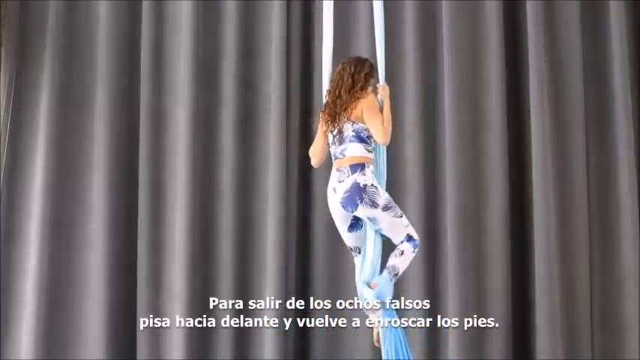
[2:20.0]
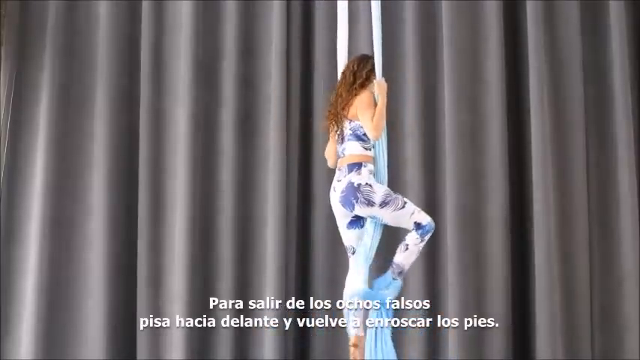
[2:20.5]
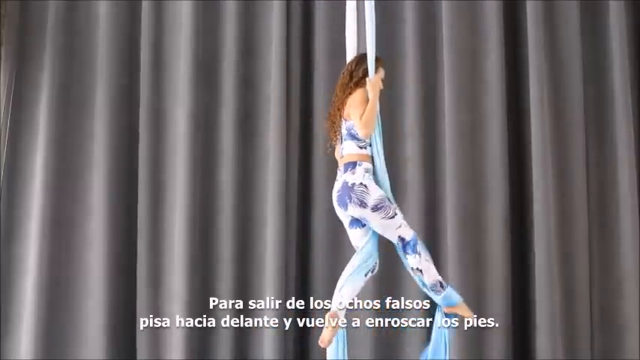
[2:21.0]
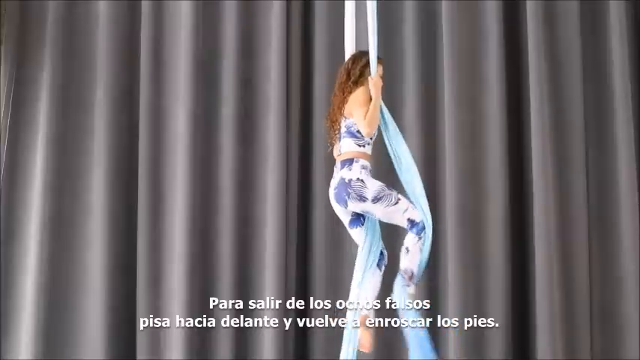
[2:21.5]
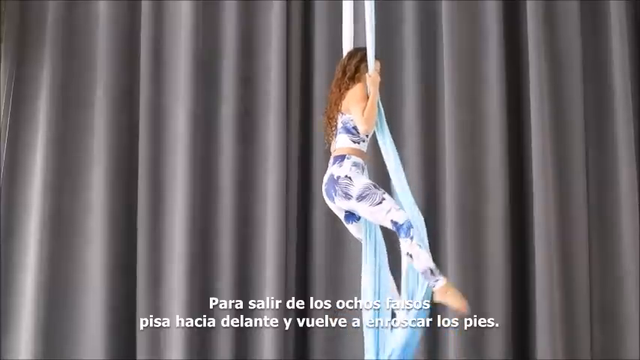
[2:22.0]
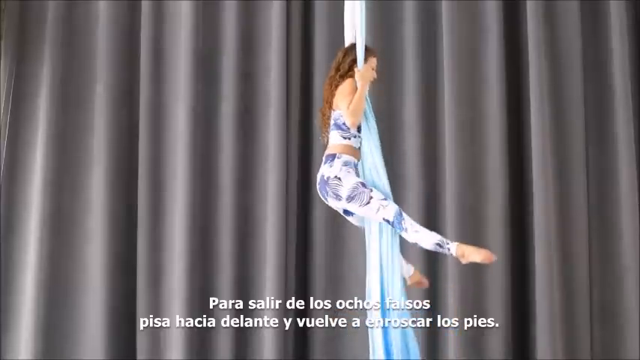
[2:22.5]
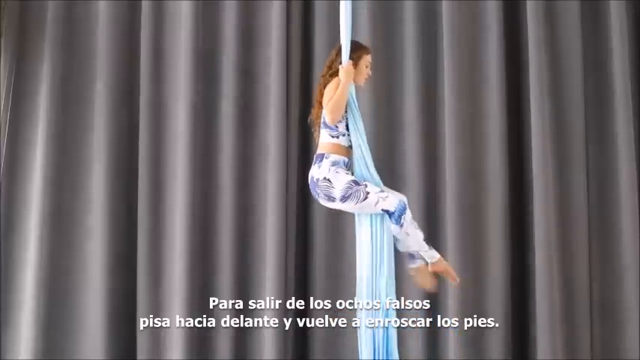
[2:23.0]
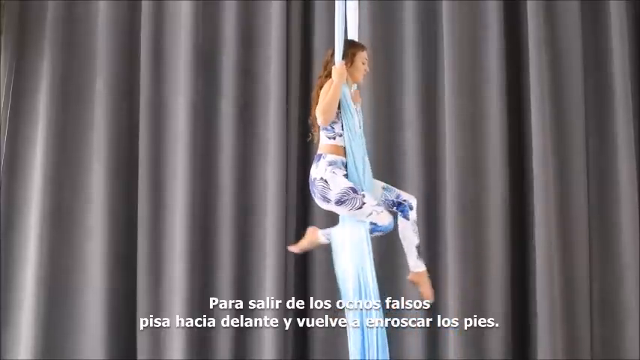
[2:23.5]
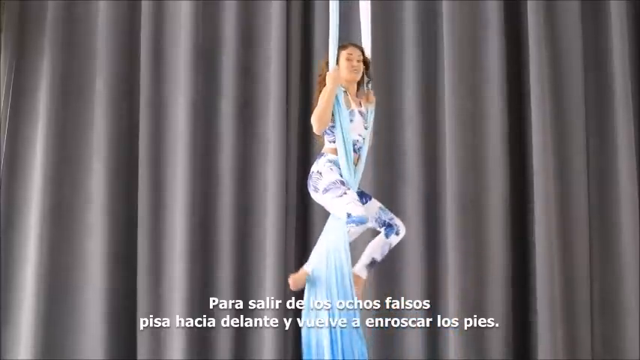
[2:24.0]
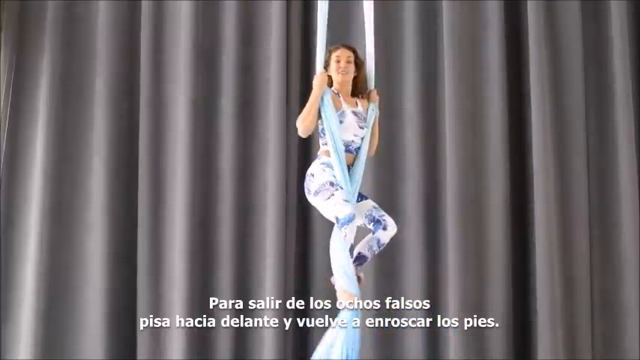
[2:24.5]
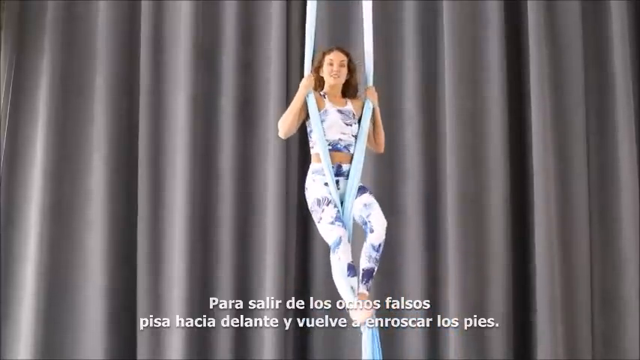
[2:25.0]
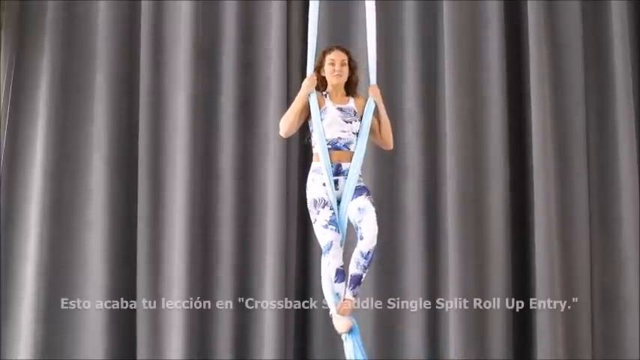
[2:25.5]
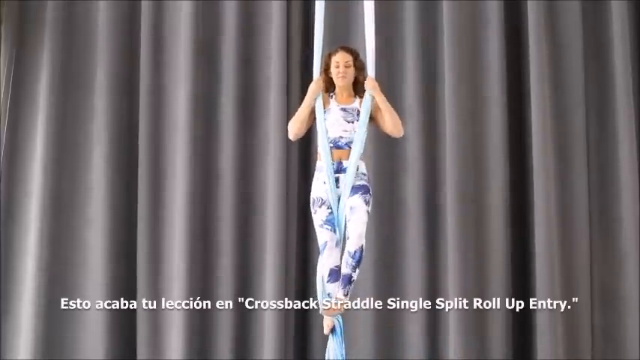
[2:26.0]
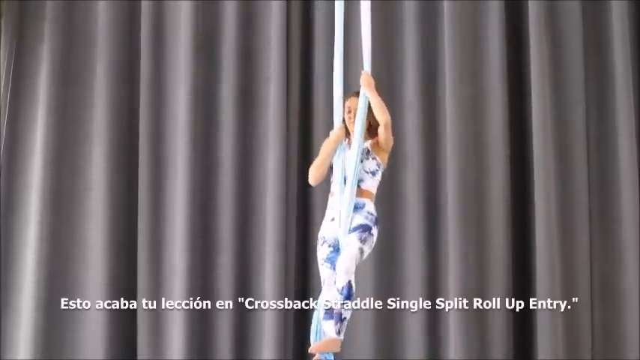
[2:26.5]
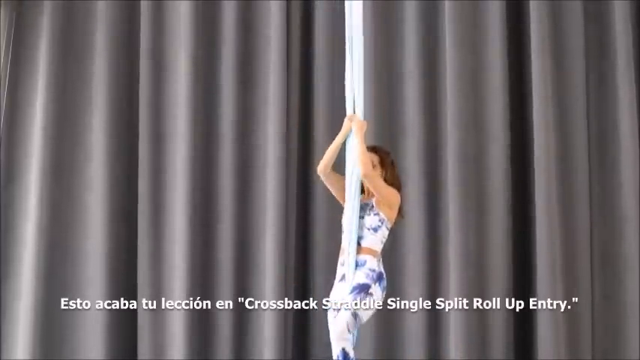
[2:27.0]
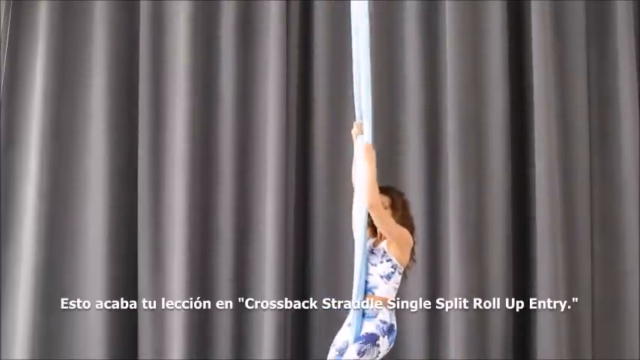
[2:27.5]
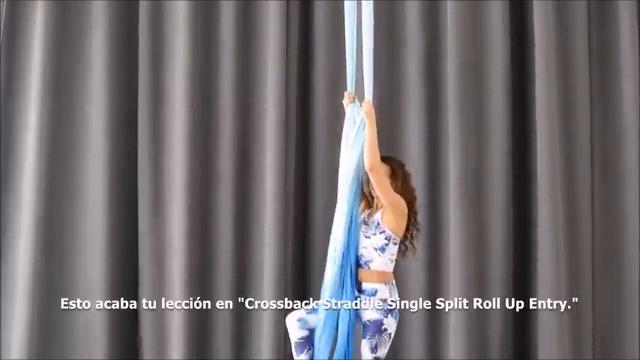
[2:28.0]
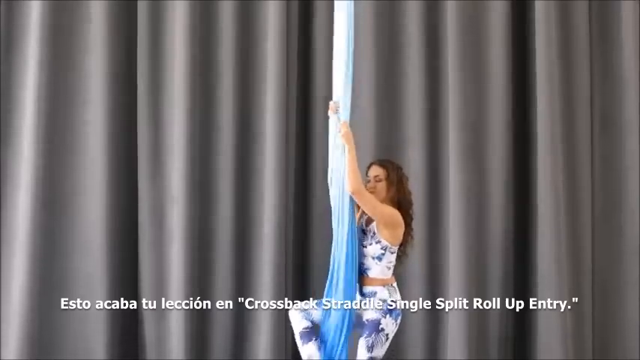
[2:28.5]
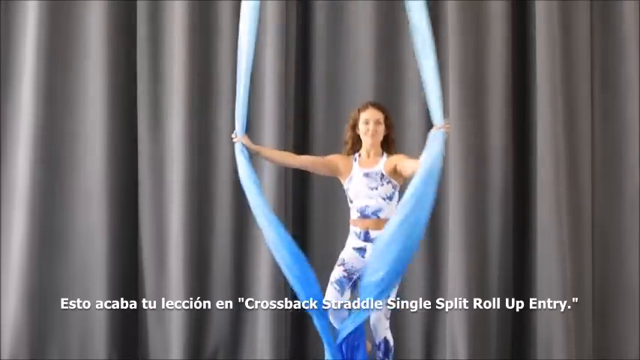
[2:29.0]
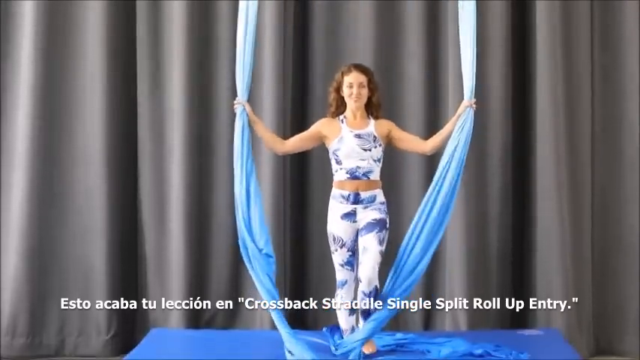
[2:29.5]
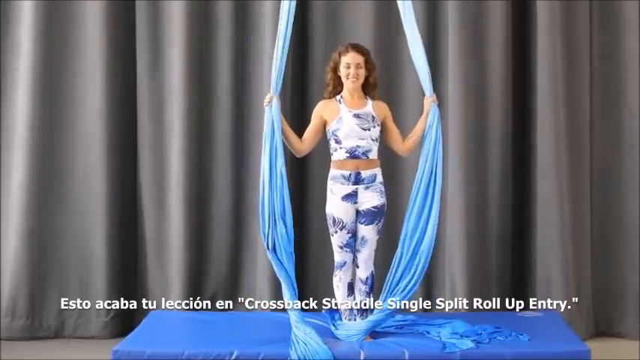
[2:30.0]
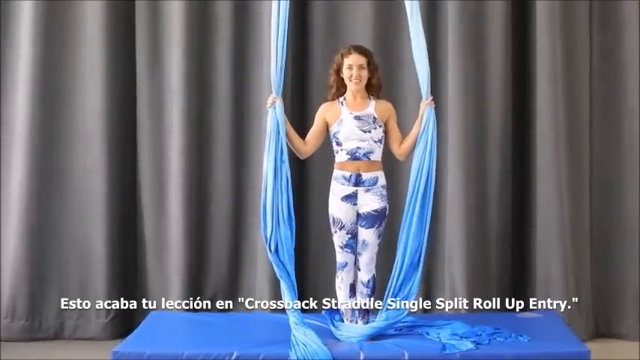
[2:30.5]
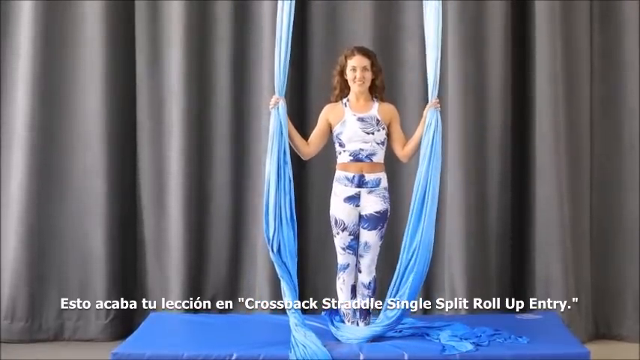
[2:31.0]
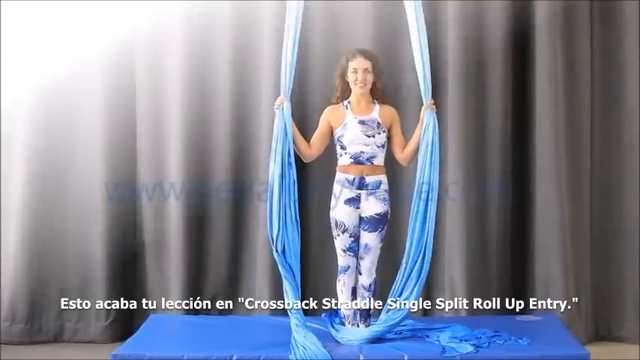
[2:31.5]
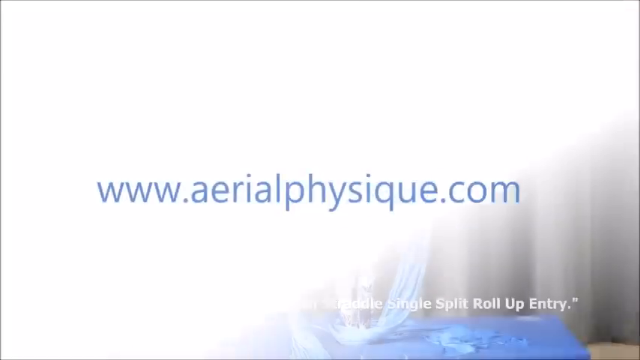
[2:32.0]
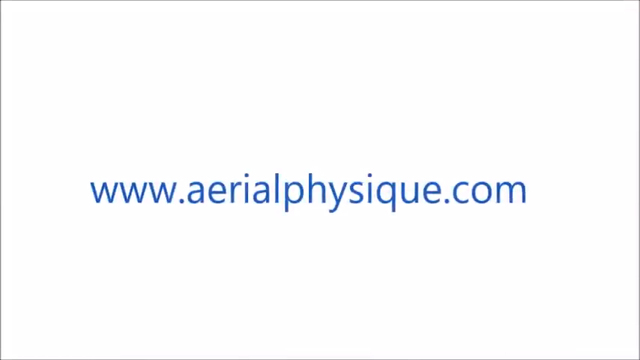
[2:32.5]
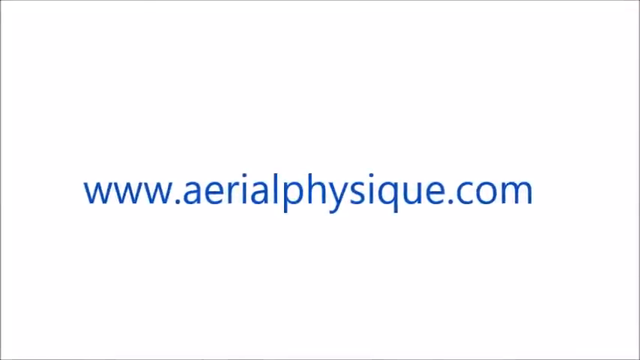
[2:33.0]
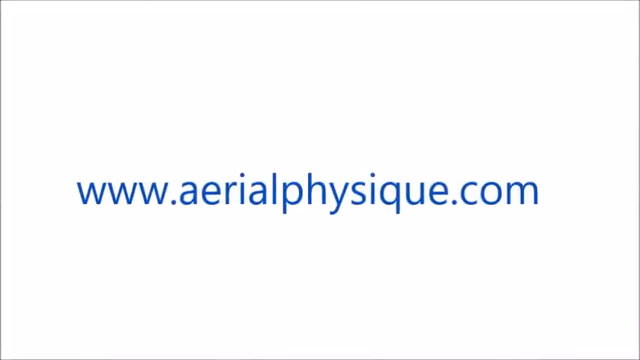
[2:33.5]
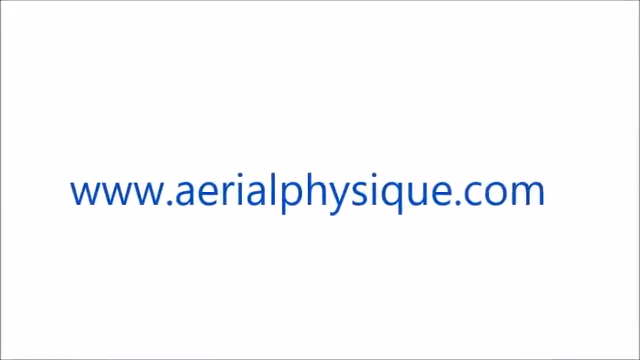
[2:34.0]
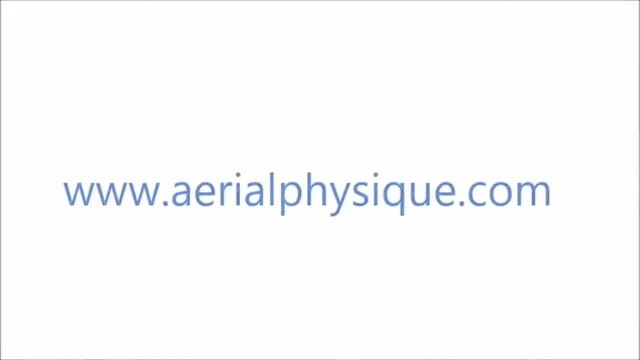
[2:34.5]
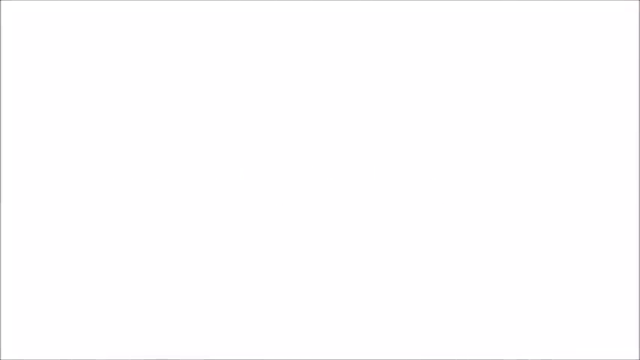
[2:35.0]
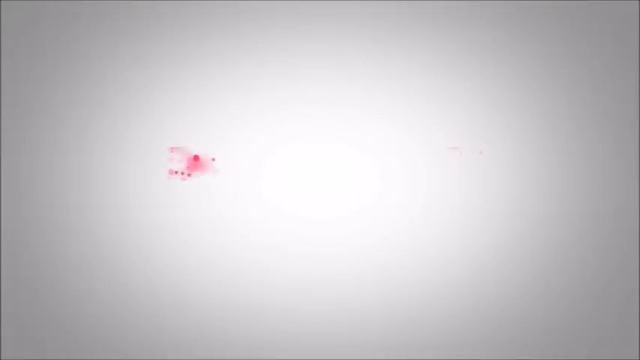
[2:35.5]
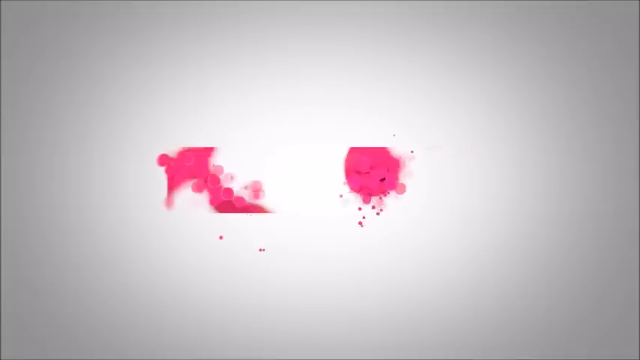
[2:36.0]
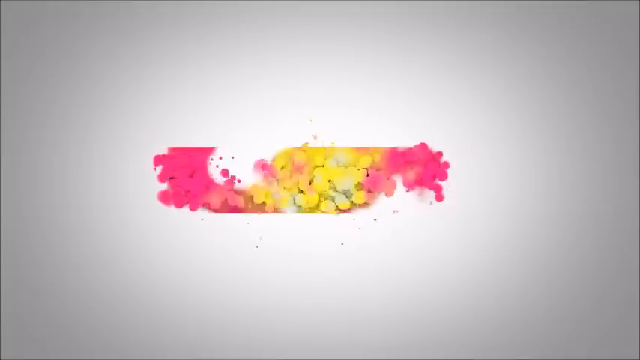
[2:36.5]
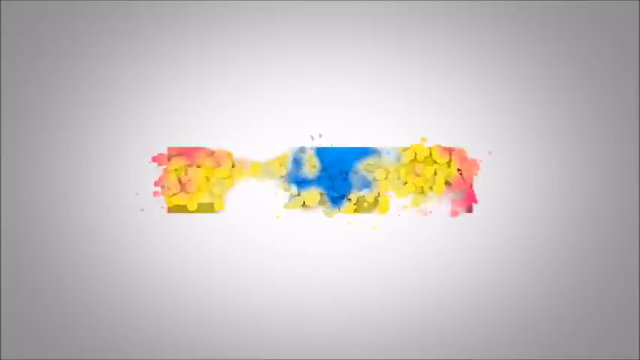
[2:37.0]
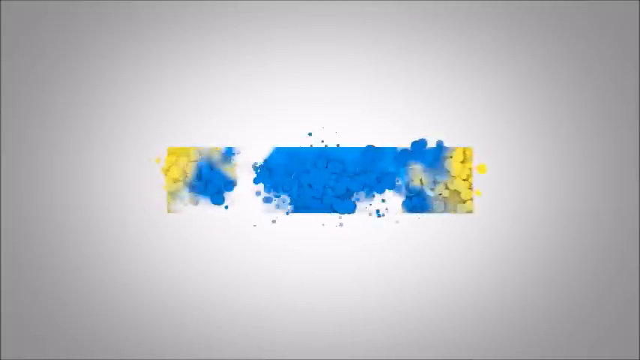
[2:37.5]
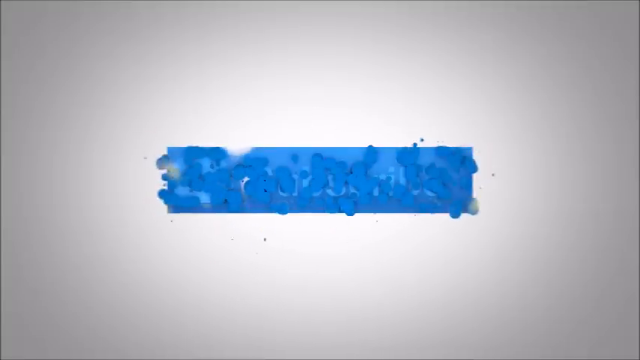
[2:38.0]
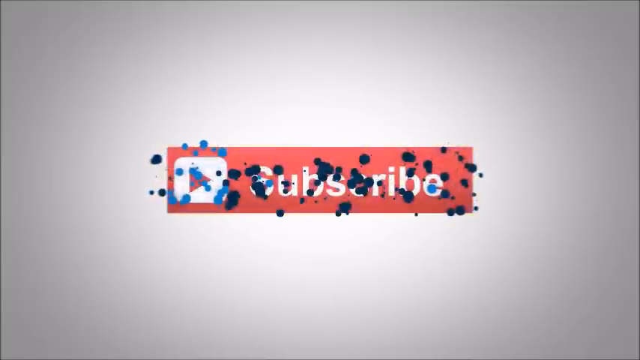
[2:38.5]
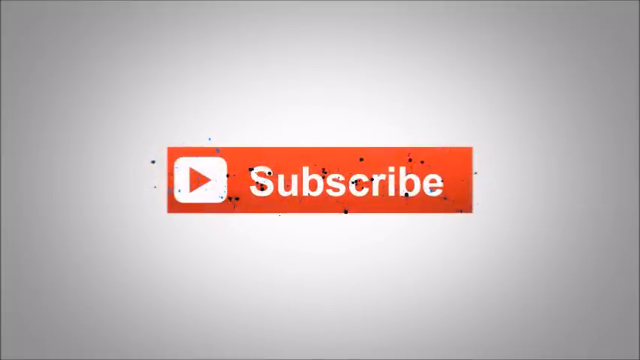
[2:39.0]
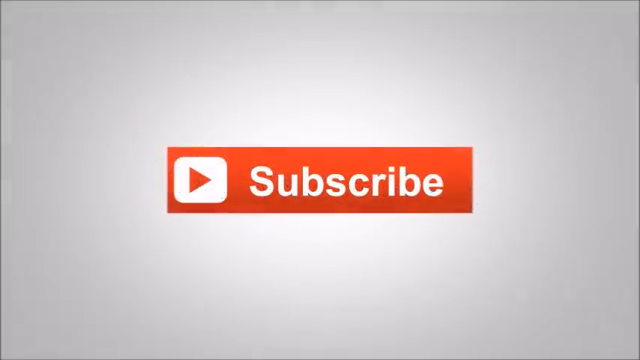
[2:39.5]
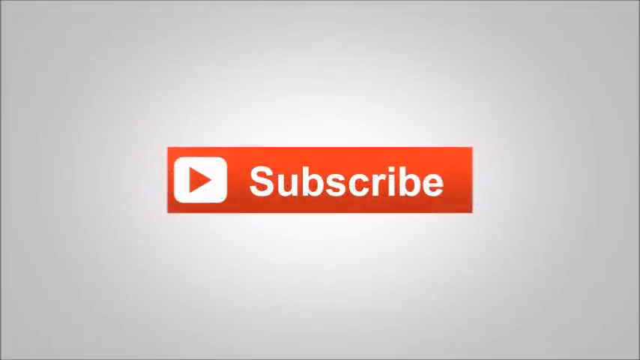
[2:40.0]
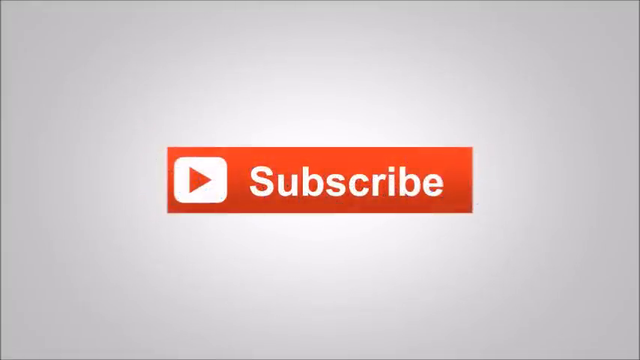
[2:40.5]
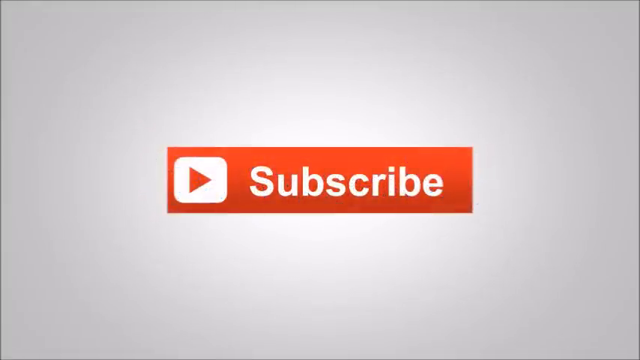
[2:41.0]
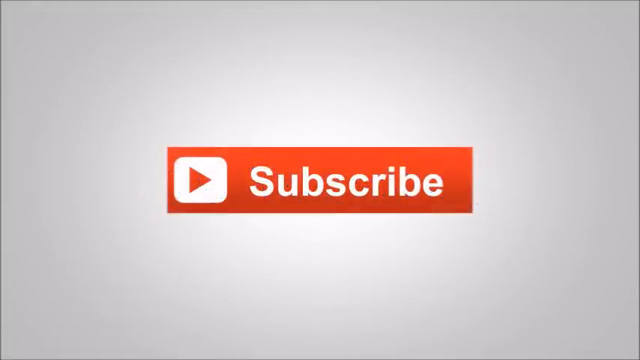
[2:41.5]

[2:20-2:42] In front of a gray curtain, a woman does an aerial performance with two pieces of long, stretchy blue cloth hanging down, probably from the ceiling. She slowly unwraps her feet, positions the material, slowly does her flip, and gets to the bottom. Toward the end she is smiling and comes a little closer to the screen. A line then passes through, making her picture go away as a new page with the website "aerialphysique.com" pops up; the woman's legs are still visible while the top page remains and the bottom page comes up. At the very end, a box changes colors between red, yellow and blue, then reads "subscribe," with a little white YouTube box containing an arrow pointing to the right.